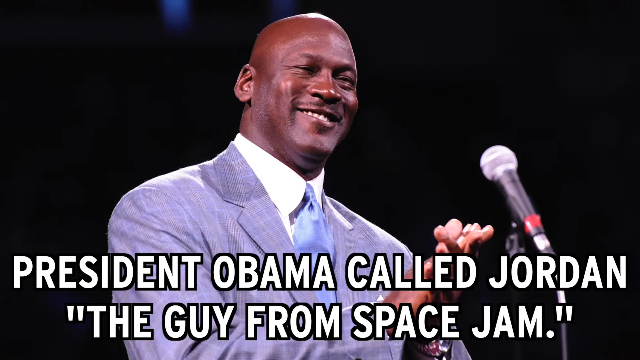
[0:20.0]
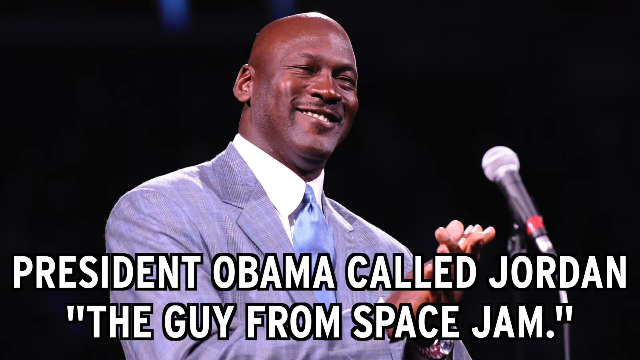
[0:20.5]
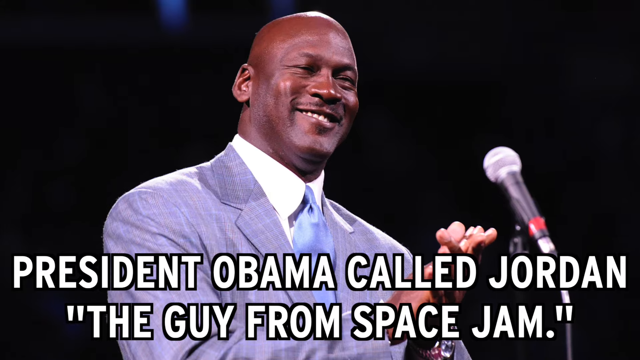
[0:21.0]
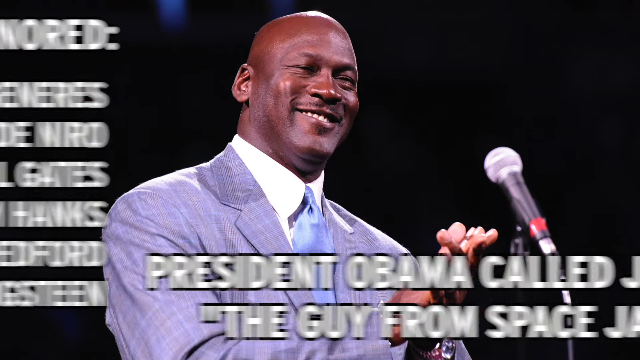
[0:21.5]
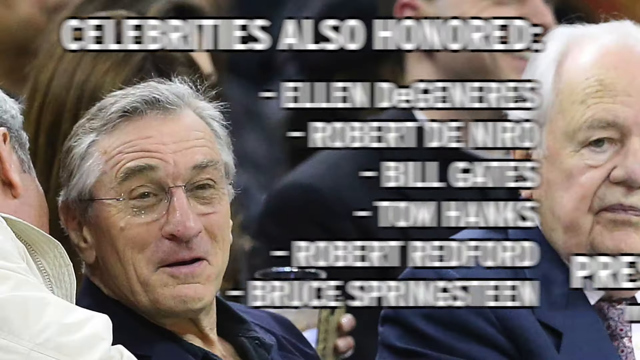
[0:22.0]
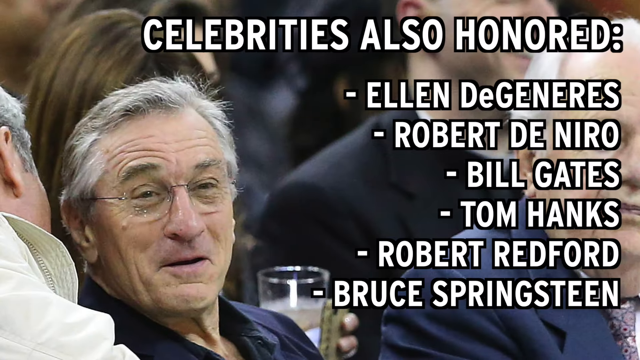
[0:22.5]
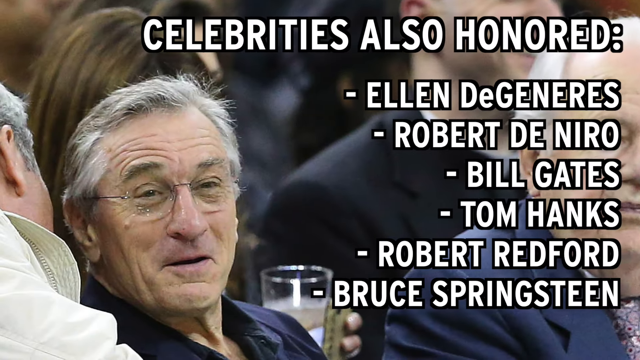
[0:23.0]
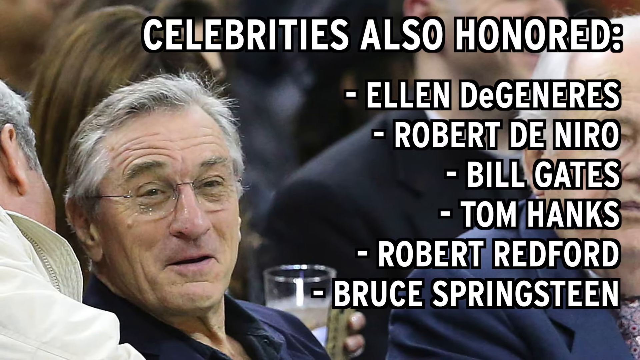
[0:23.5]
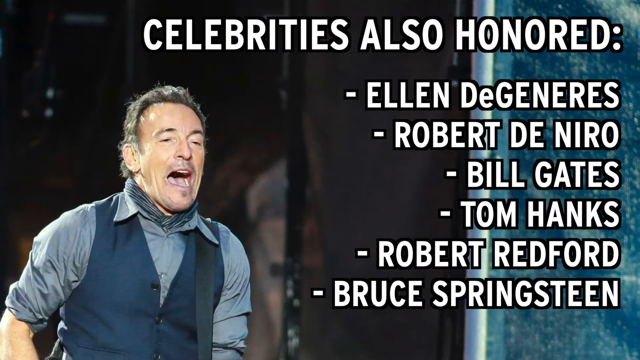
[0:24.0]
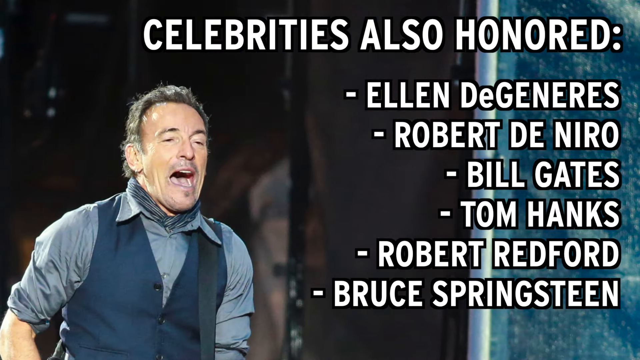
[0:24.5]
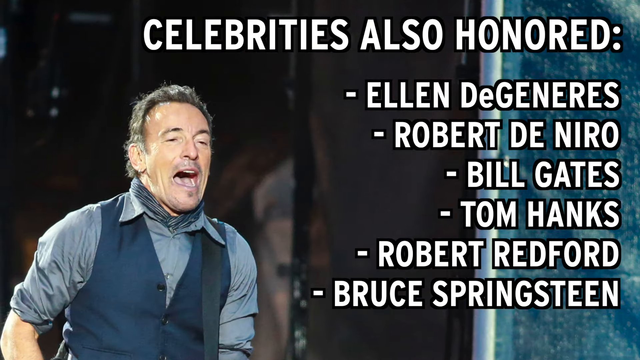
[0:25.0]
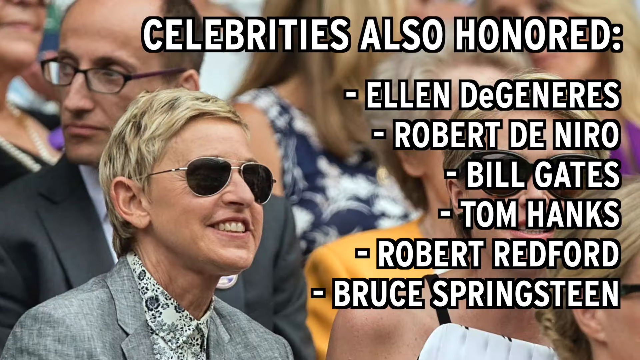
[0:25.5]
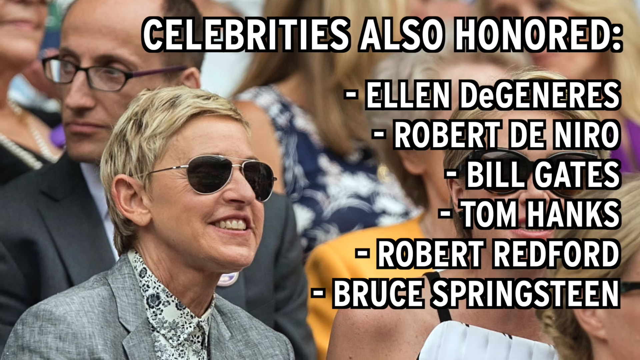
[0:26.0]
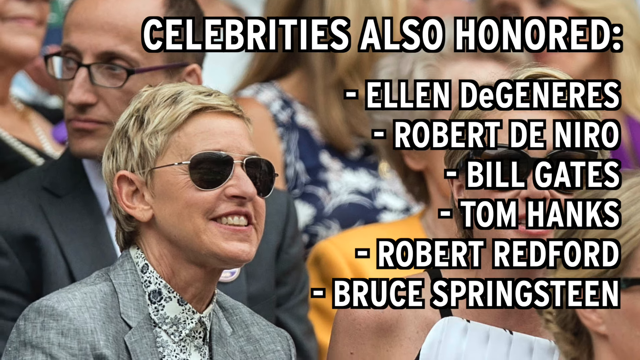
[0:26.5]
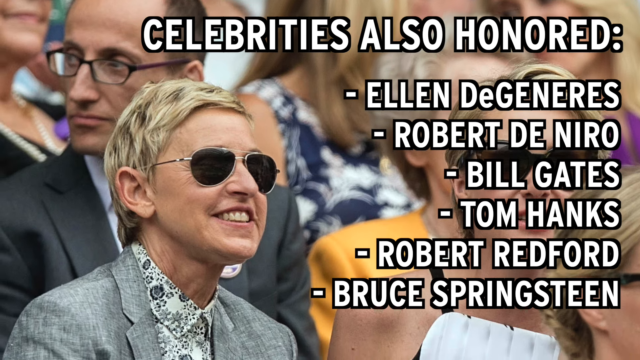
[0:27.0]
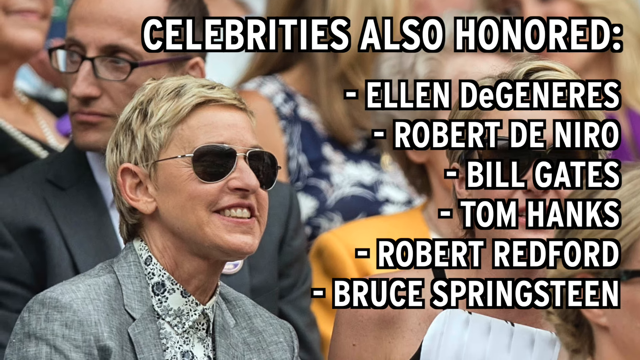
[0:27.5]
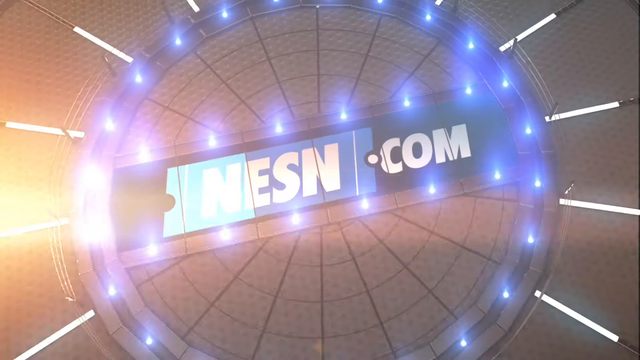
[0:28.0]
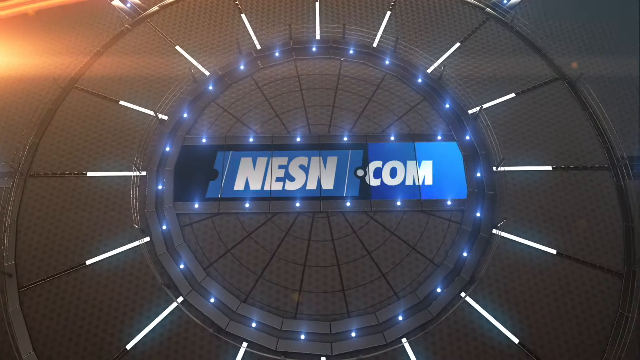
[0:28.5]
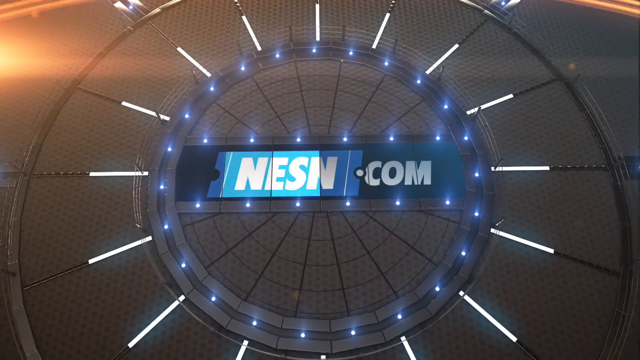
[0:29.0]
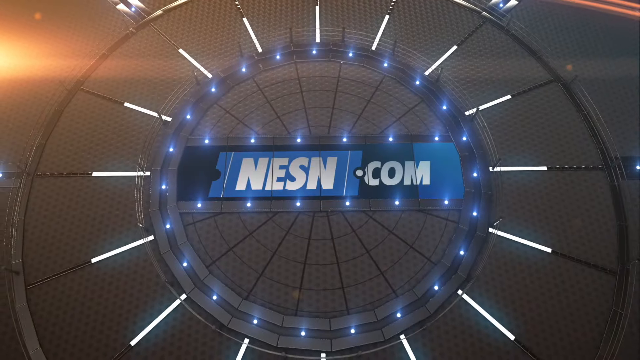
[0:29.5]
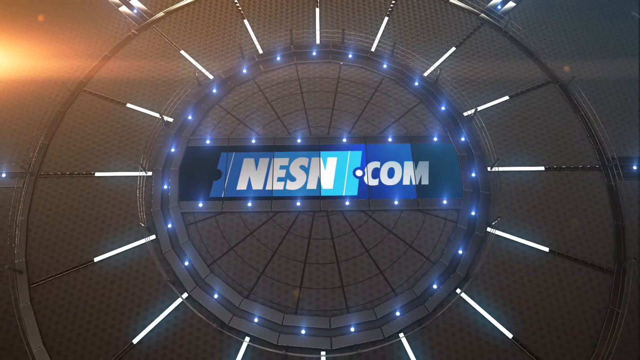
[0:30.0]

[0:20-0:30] A picture shows Michael Jordan smiling, wearing a light blue suit with a light blue tie and a white dress shirt, with a microphone in front of him against a mostly black background. White text on the screen says "President Obama called Jordan the guy from Space Jam." The view then switches to other celebrities also honored: Ellen DeGeneres, Robert De Niro, Bill Gates, Tom Hanks, Robert Redford and Bruce Springsteen. A photo shows Robert De Niro with a woman behind him to his side; the back of a man in a jacket with a raised collar is visible, and there is a cup. Next comes a picture of Bruce Springsteen, then Ellen DeGeneres wearing a gray suit. The video then changes to an advertisement for NESN.com, showing some sort of satellite dish that is lit up with lights going around it.